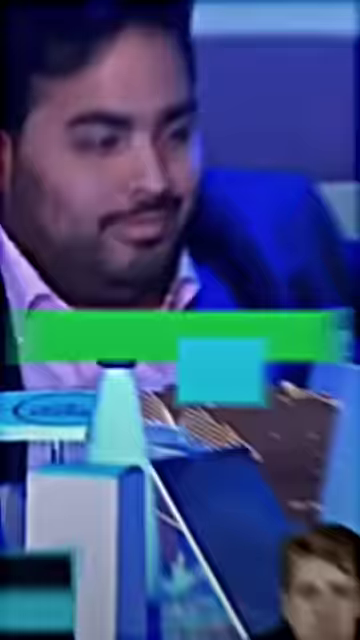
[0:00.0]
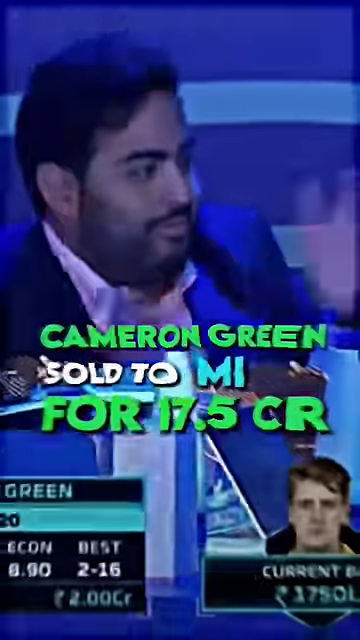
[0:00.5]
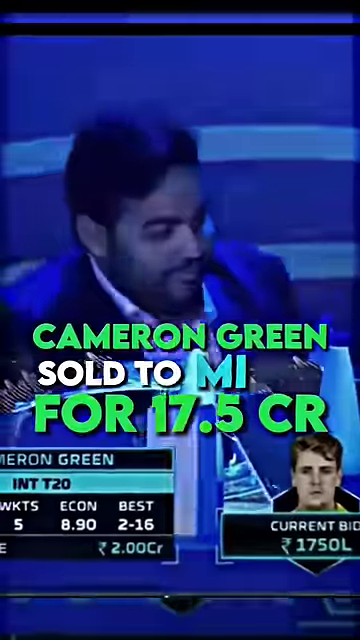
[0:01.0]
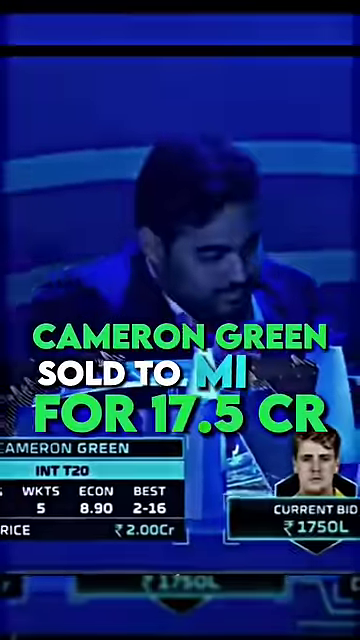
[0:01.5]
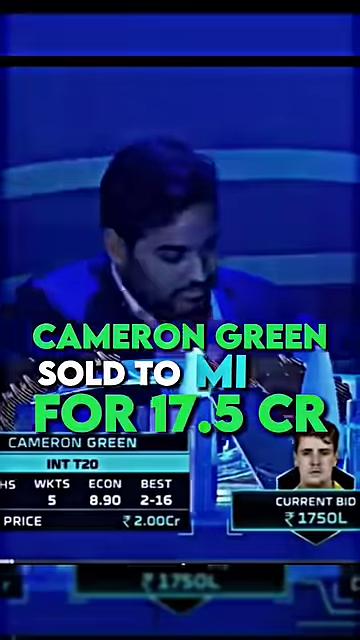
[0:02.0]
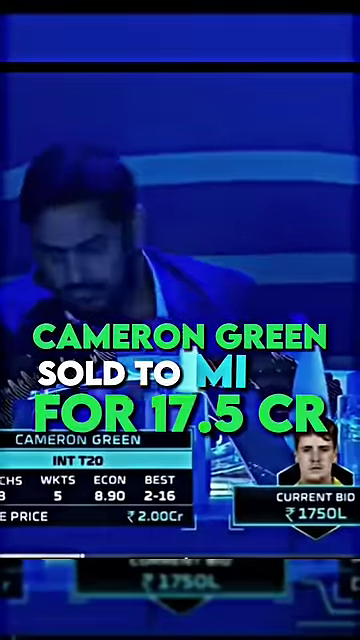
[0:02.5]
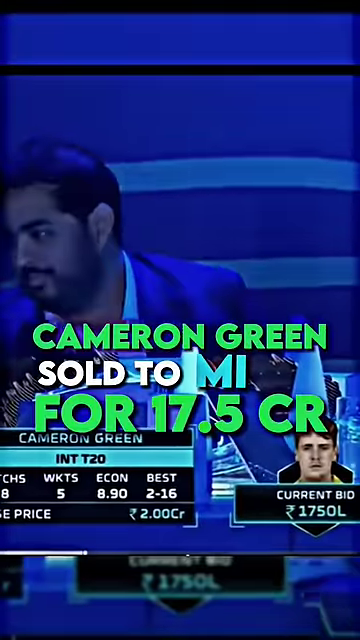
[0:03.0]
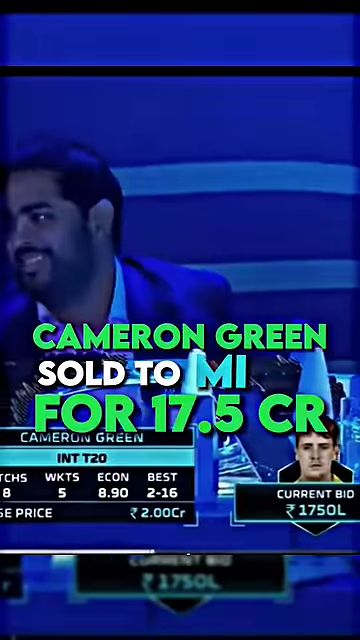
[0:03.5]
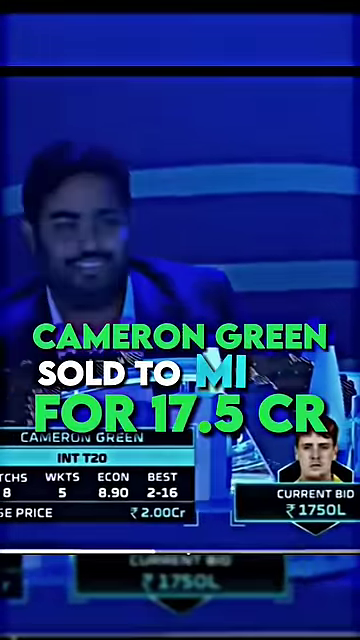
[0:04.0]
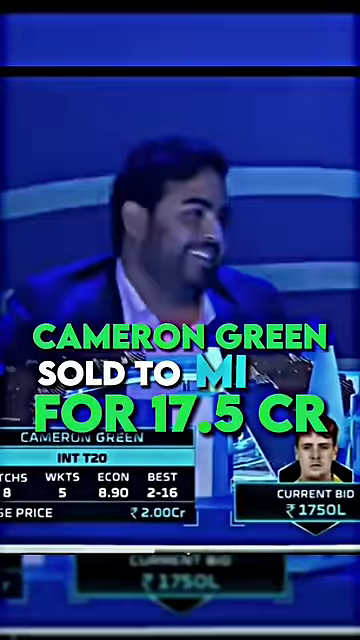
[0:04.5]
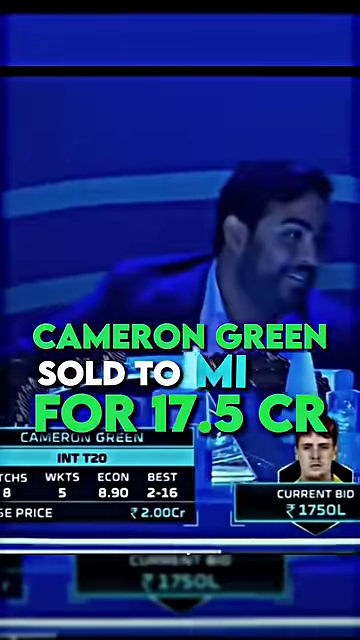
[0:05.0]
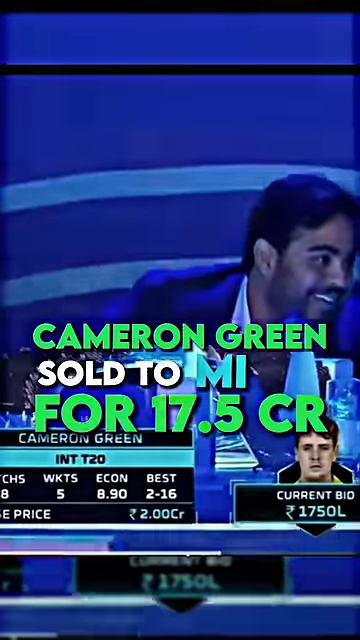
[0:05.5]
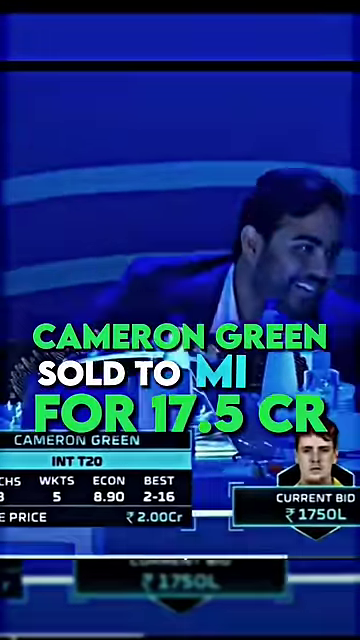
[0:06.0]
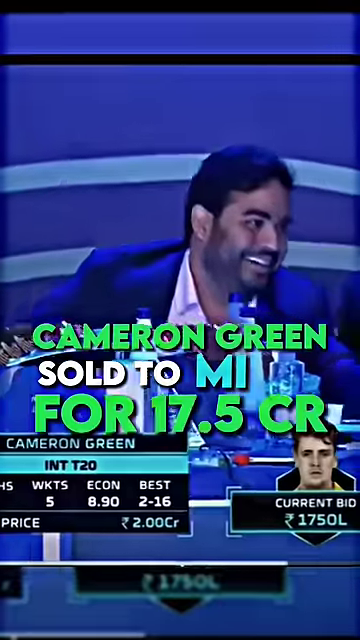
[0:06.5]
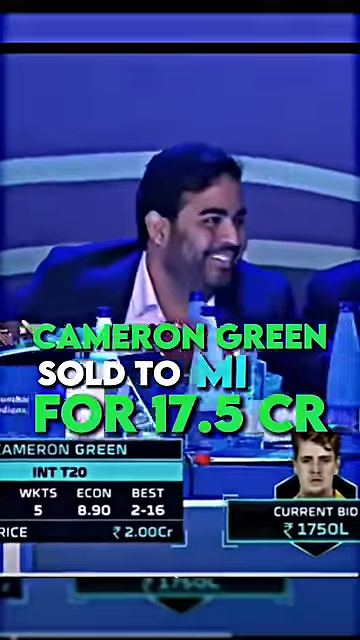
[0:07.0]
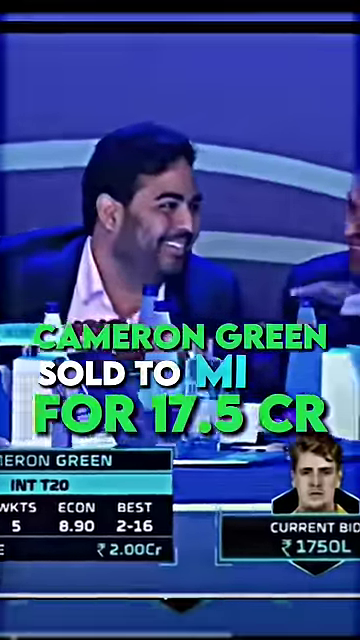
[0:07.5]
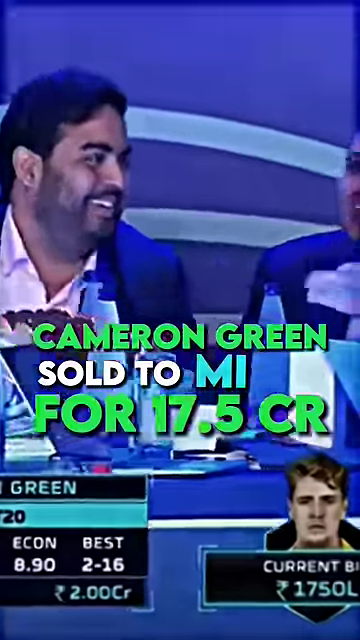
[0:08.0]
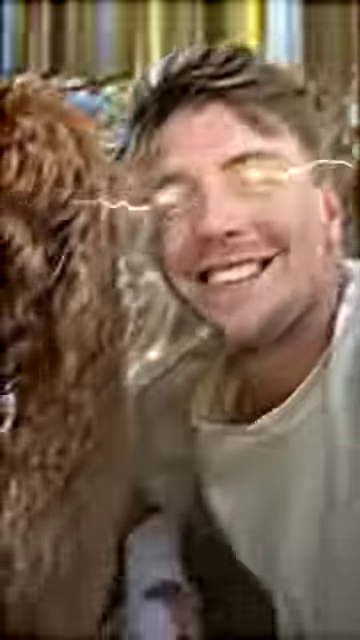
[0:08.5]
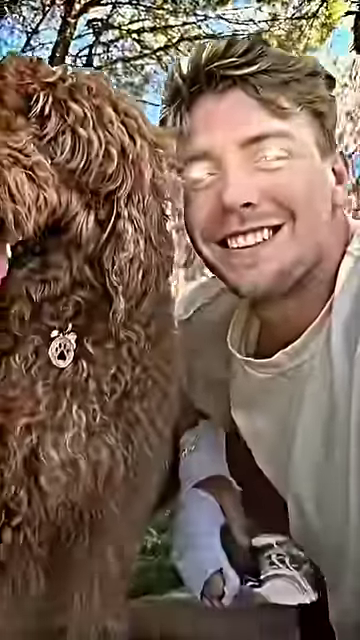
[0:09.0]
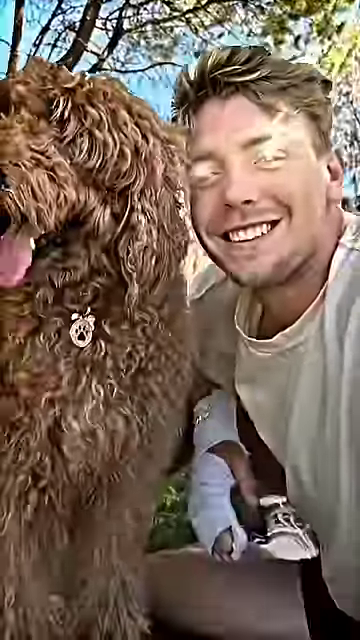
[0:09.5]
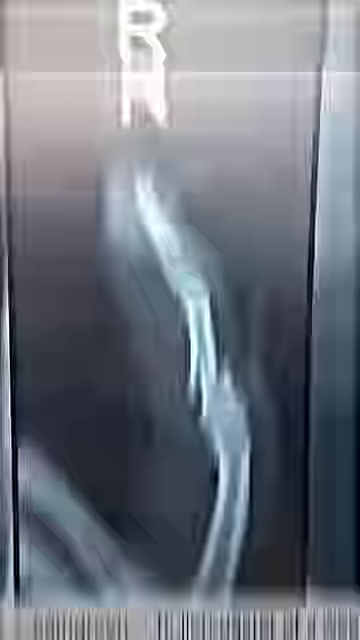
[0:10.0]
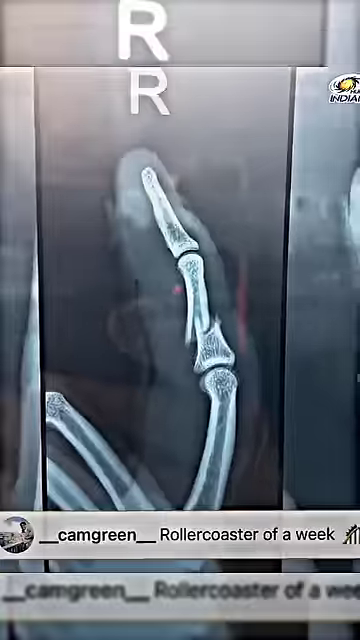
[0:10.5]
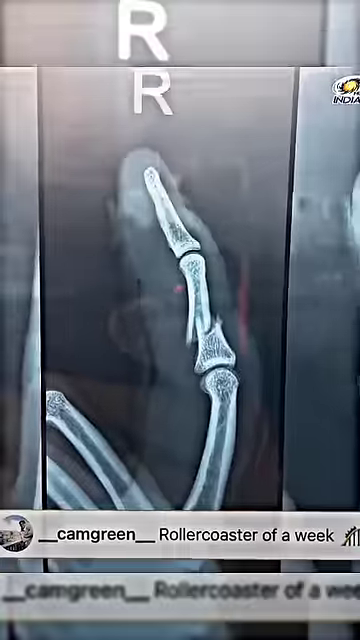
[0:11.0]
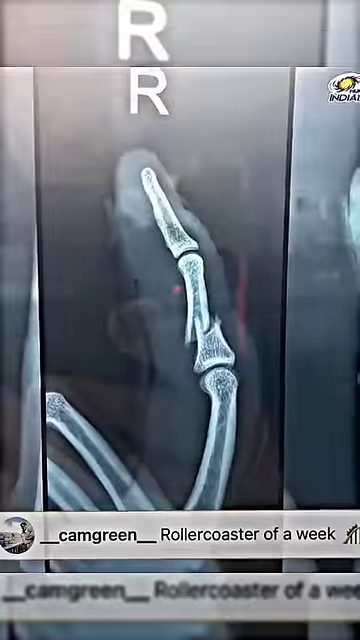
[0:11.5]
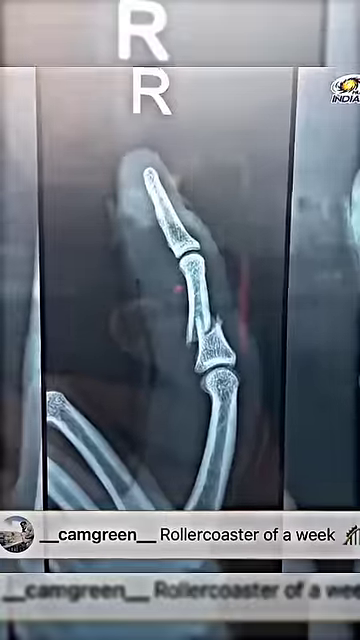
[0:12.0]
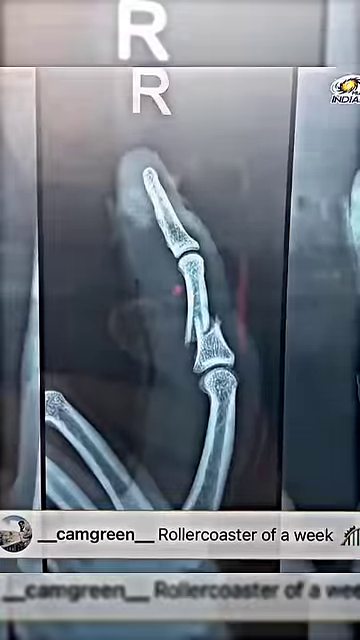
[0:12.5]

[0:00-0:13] A vertical video appears to show an individual wearing a suit and interacting with other people. He appears to be sitting down, the lights seem to be flickering, and he appears to be bidding on something. On the screen, text reads "Cameron Green sold to MI for 17.5 CR," with CR most likely a currency. Below that are some stats for Cameron Green, with the words "Econ Best WKTS" and numbers below them. In the bottom right corner is a picture of the individual, along with a current bid of 1,750 L. The video ends with a picture of this individual standing next to a large breed dog that appears to be a golden doodle.